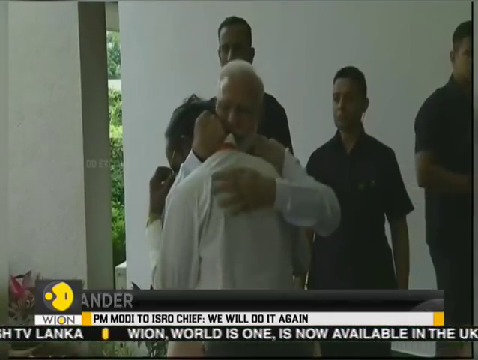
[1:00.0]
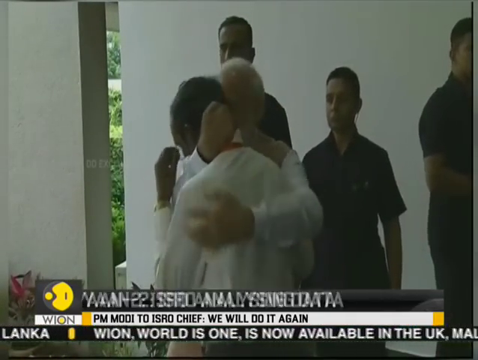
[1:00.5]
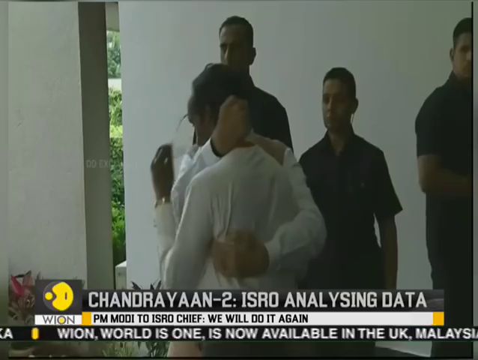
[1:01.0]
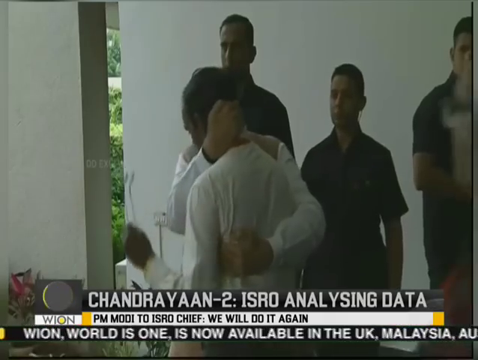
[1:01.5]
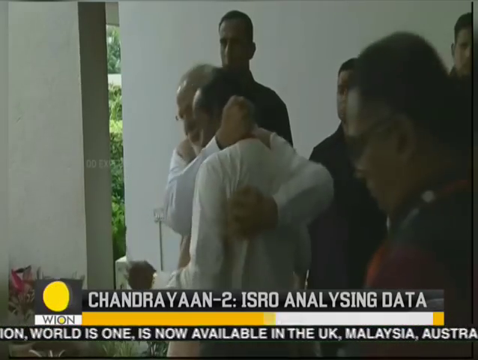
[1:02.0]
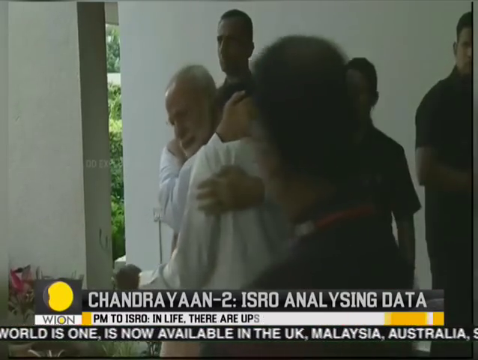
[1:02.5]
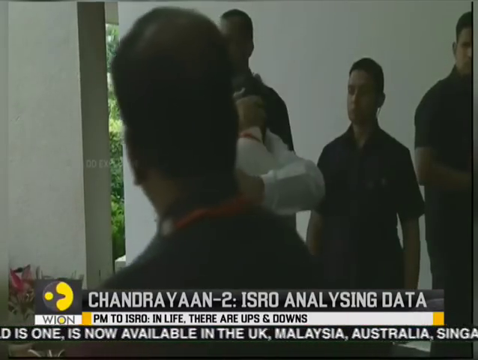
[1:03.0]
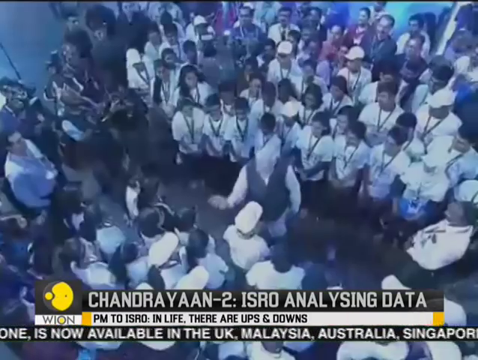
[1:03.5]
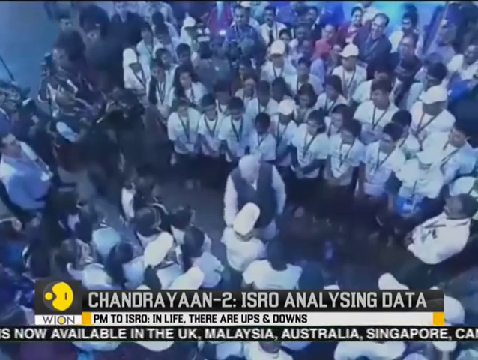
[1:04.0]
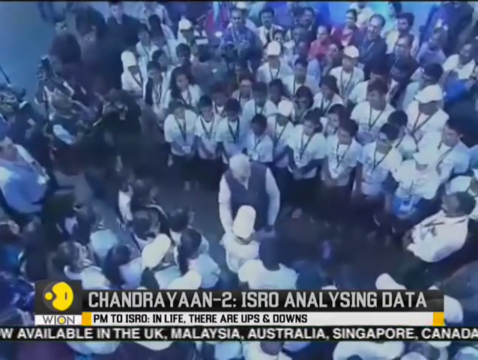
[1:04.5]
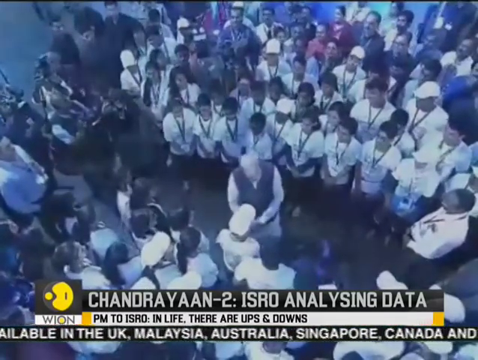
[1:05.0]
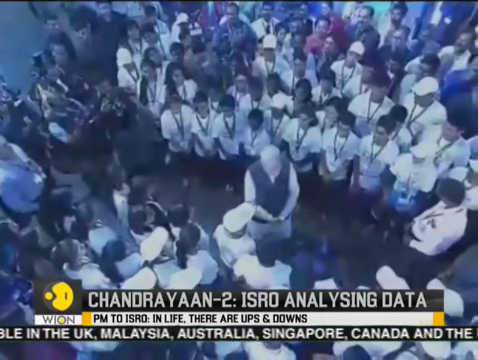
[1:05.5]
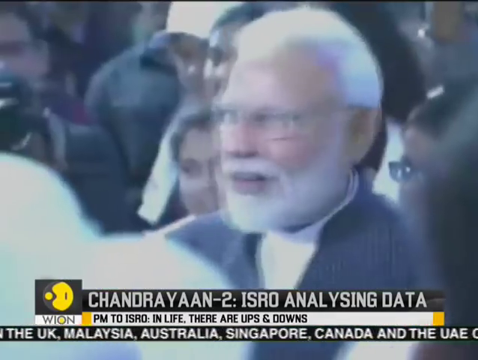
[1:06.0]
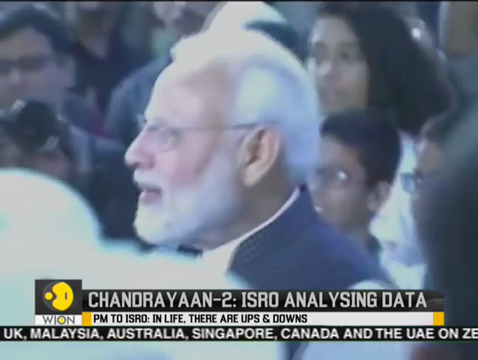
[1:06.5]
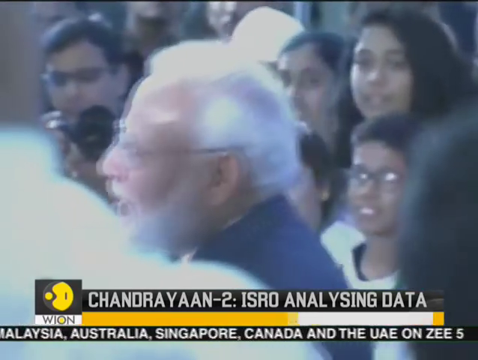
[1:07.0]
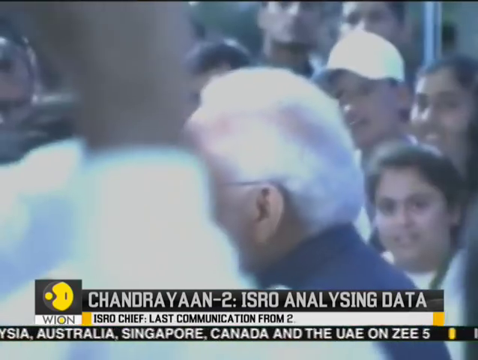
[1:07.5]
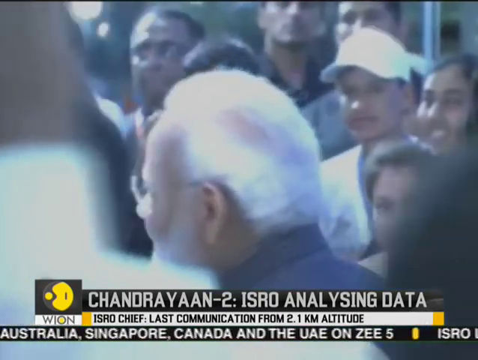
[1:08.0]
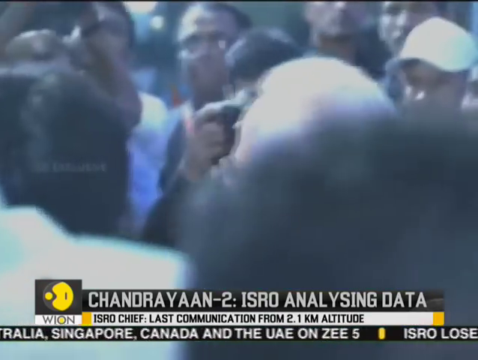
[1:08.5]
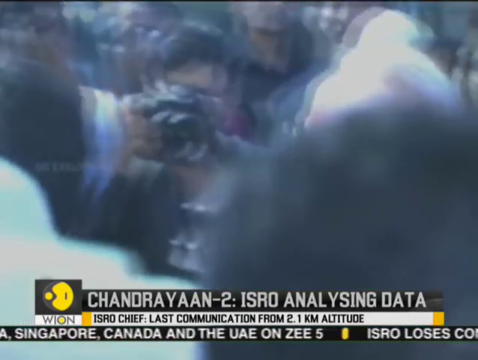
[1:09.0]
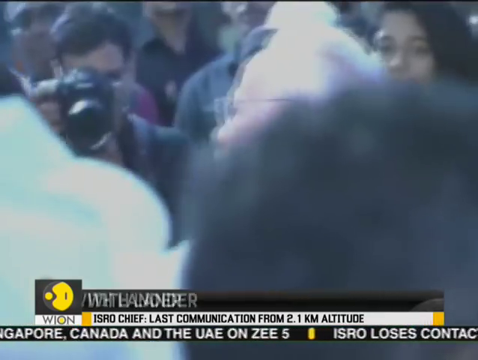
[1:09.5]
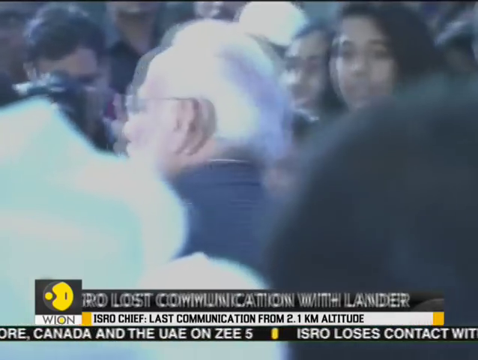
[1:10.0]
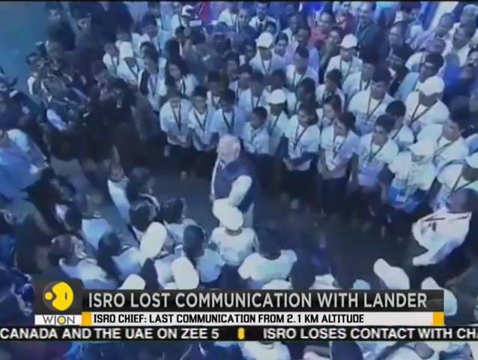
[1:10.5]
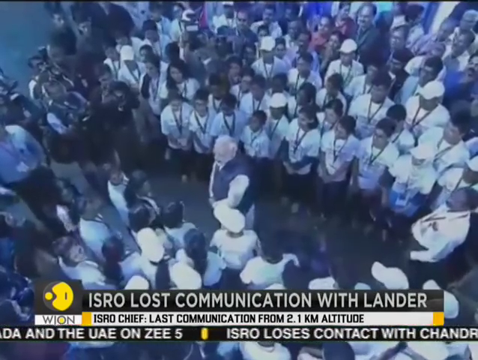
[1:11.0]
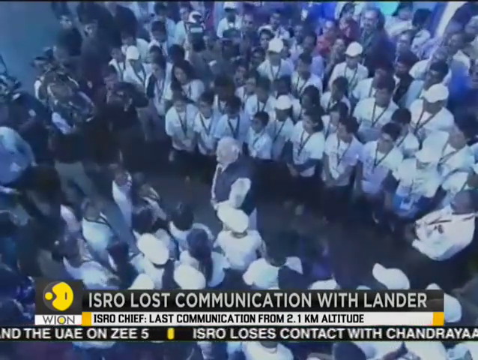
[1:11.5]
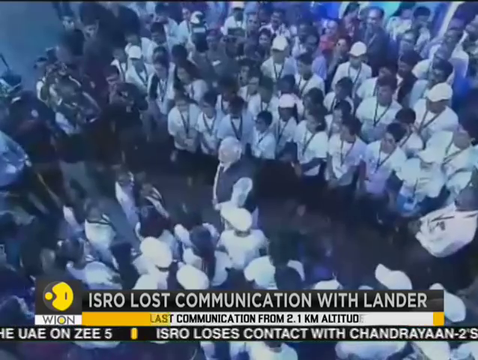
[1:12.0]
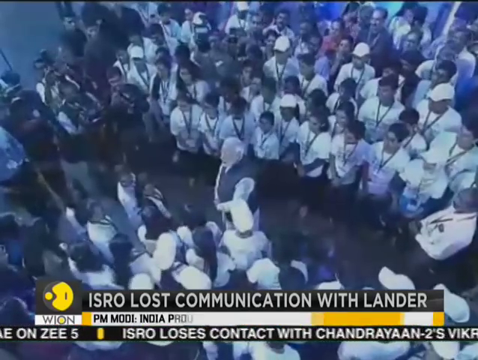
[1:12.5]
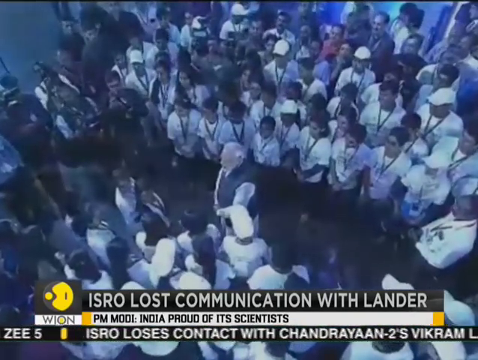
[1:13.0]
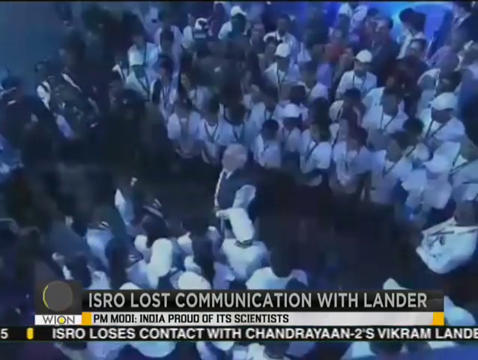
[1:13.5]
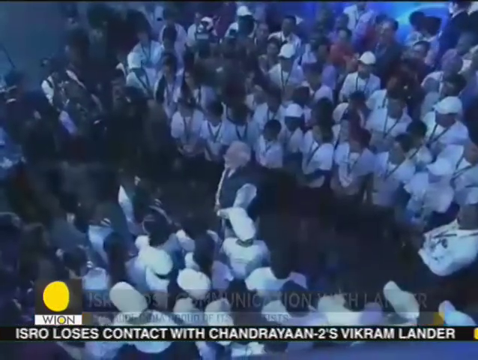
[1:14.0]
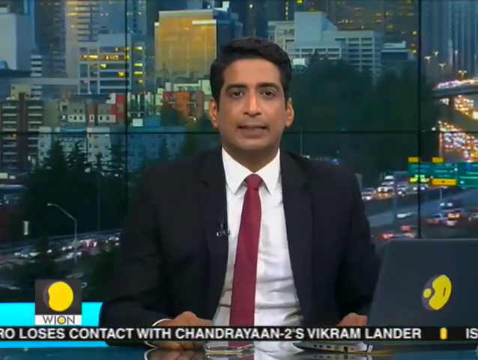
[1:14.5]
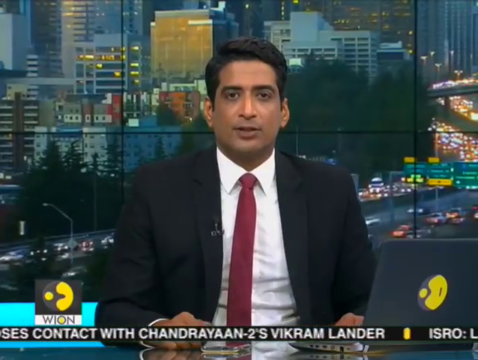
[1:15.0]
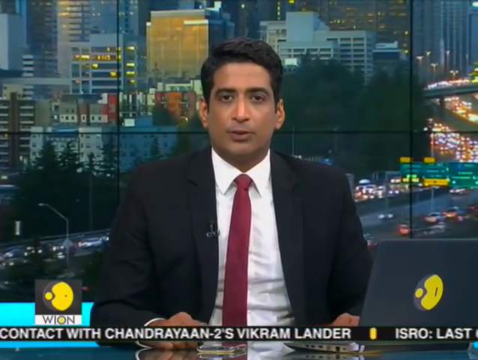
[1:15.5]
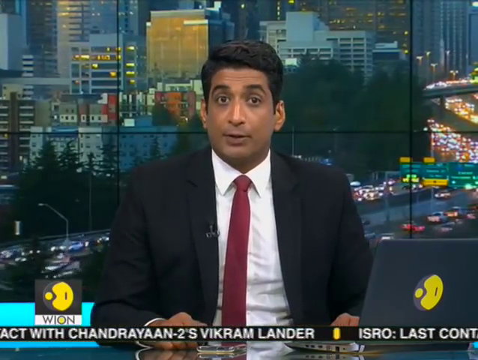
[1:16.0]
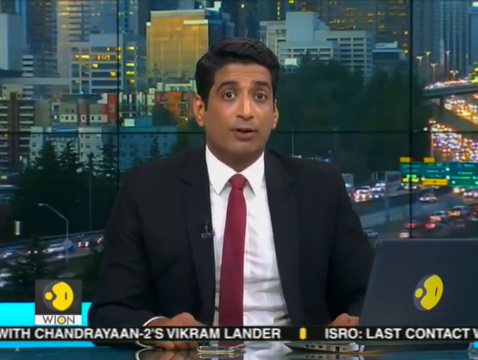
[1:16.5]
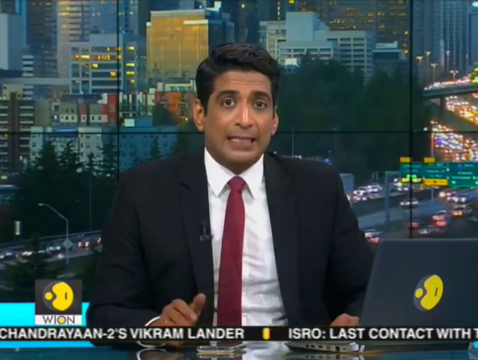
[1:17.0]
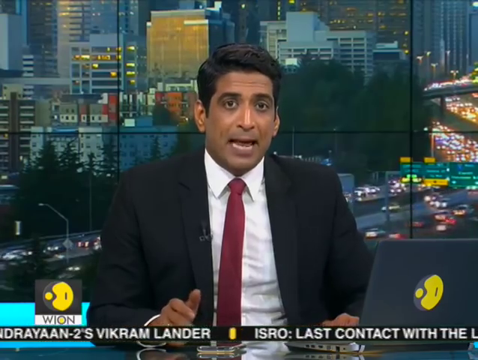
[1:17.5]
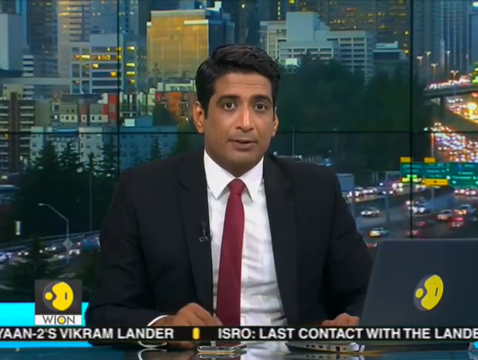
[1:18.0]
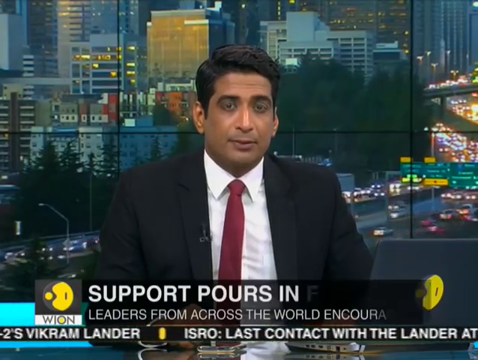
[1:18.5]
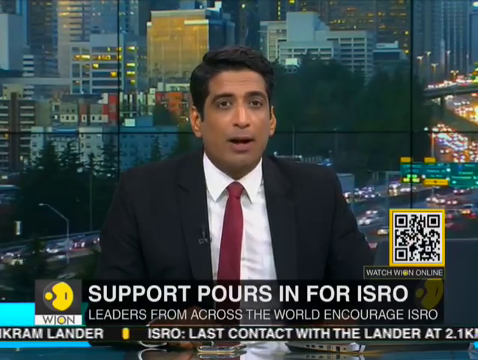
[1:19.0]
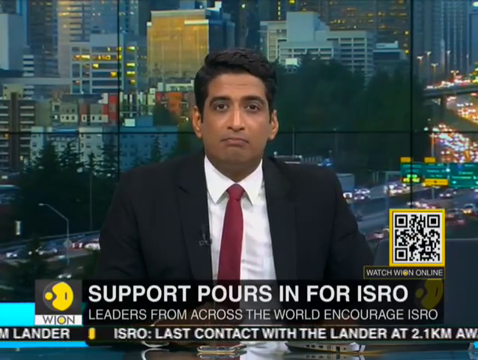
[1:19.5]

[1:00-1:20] In the WION (World is One) News report on the Chandrayaan moon lander, Modi hugs the ISRO chief. A different scene follows in which Modi wears different clothes, apparently just a different vest, and is with a group of people. On-screen text reads "support pours in for ISRO" and "leaders from across the world encourage ISRO". A QR code pops up. The text bar at the bottom is black or white with black letters and has a lot of yellow, giving a black, yellow and white color scheme.